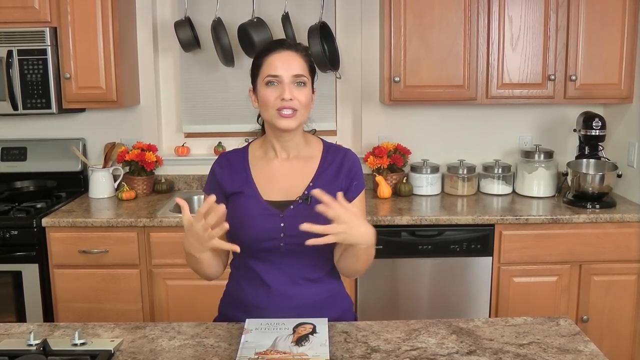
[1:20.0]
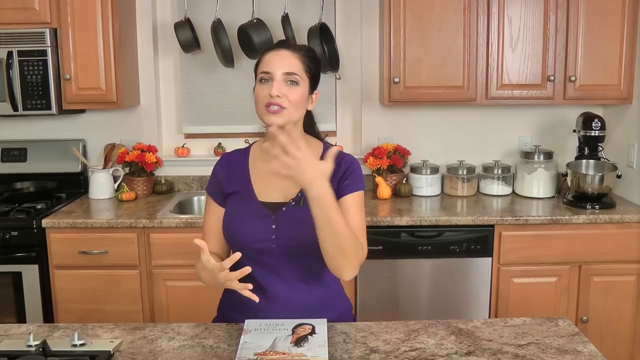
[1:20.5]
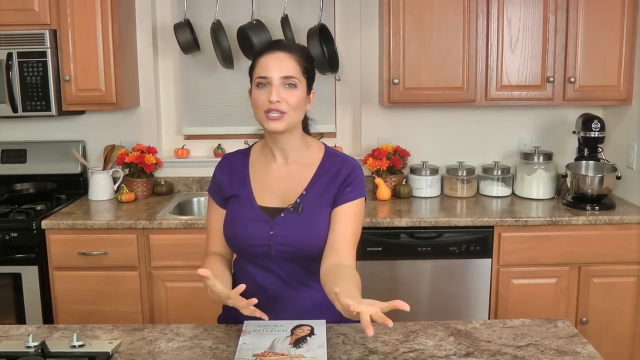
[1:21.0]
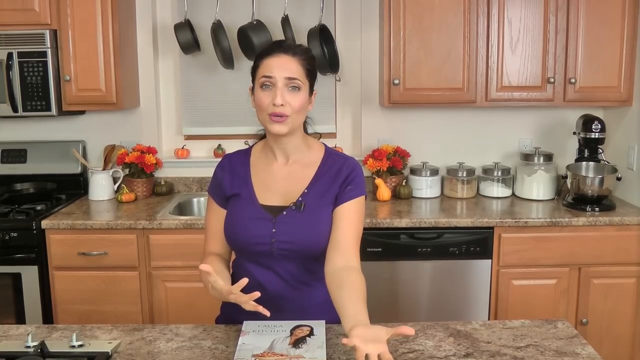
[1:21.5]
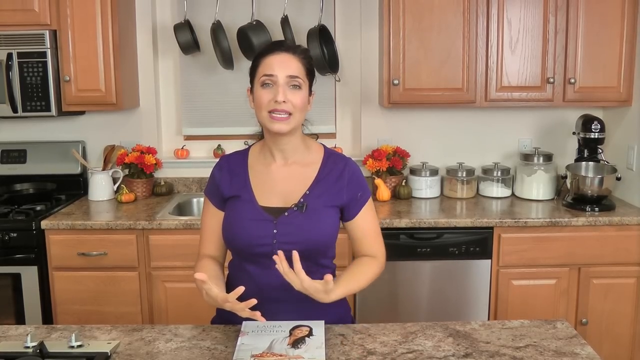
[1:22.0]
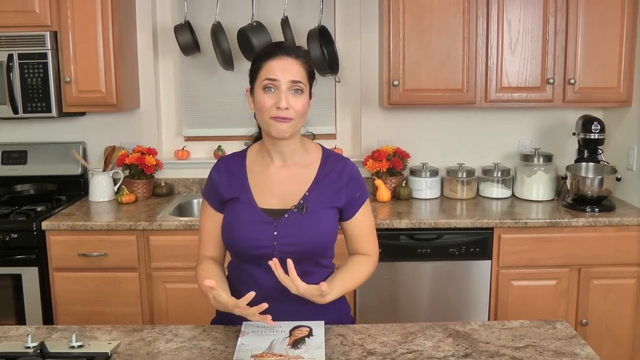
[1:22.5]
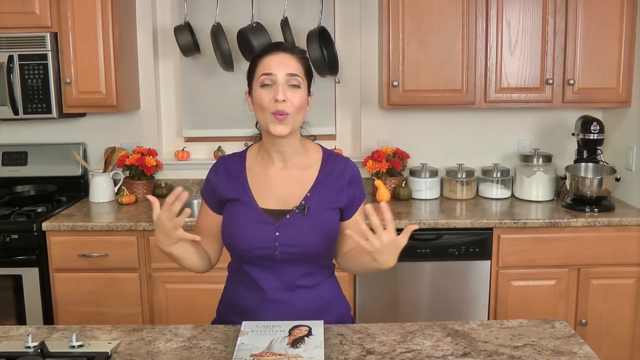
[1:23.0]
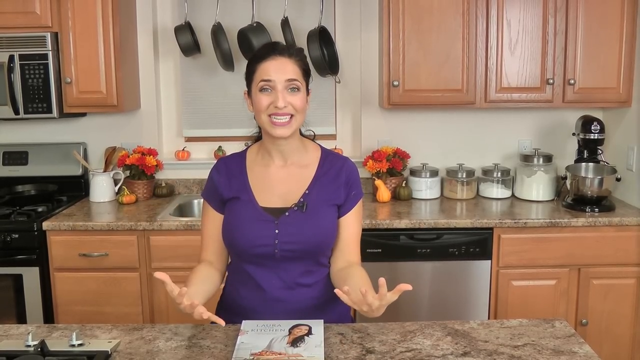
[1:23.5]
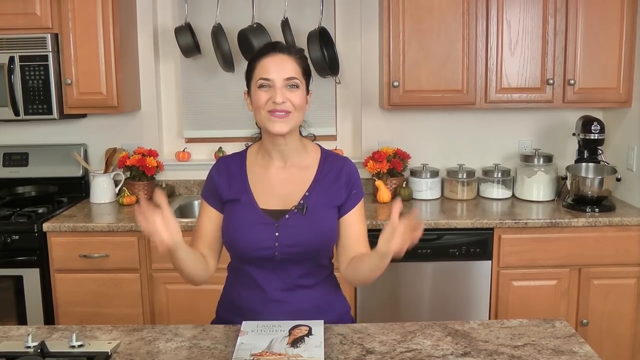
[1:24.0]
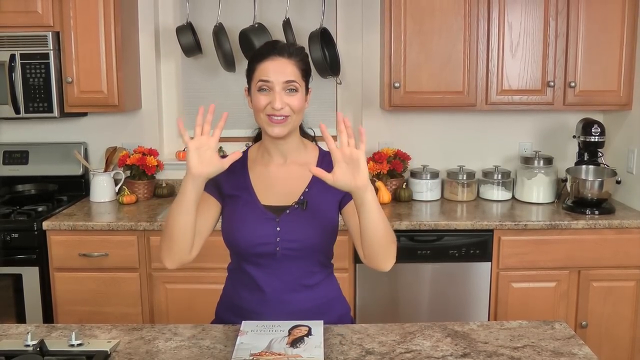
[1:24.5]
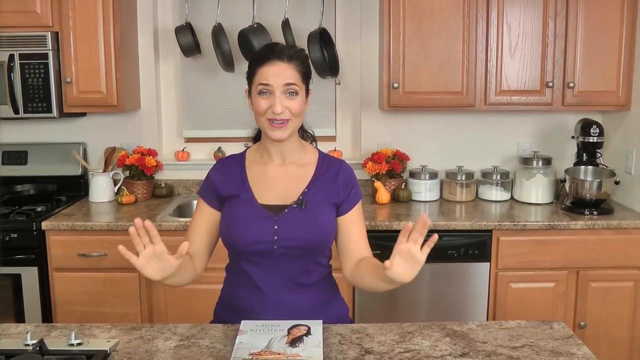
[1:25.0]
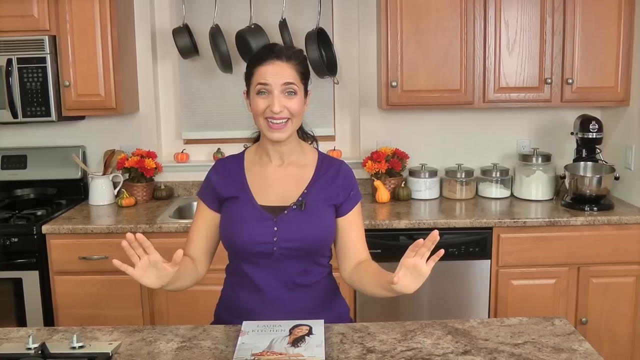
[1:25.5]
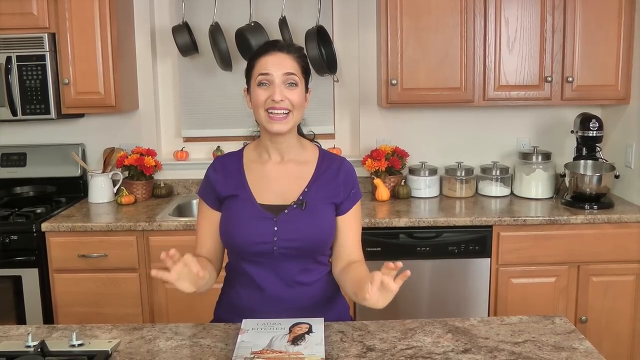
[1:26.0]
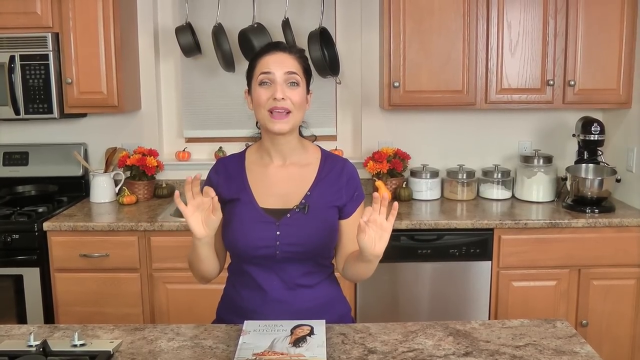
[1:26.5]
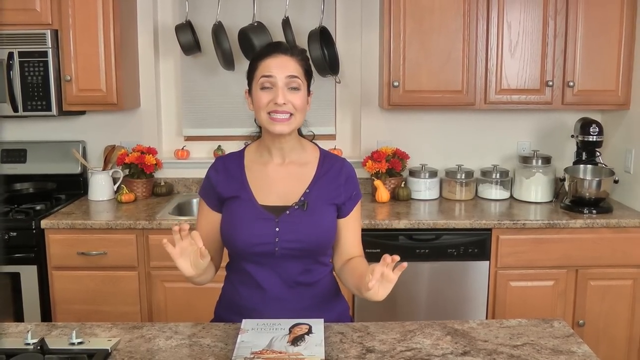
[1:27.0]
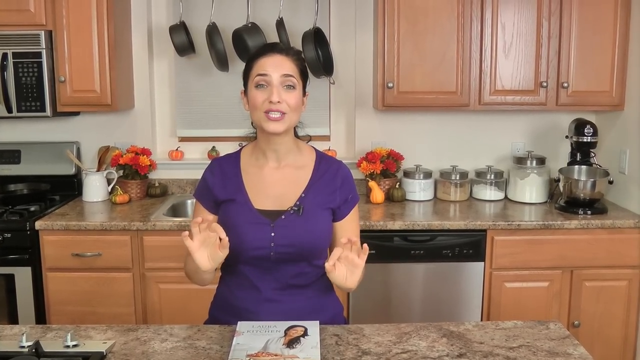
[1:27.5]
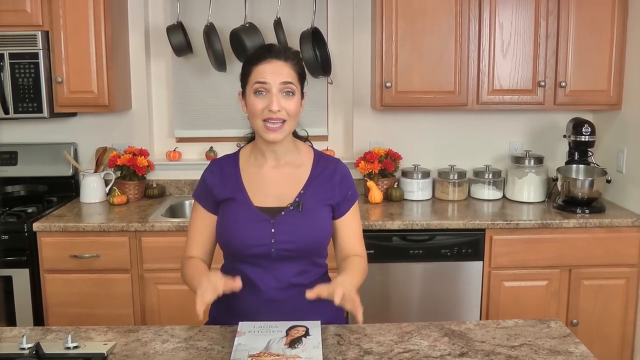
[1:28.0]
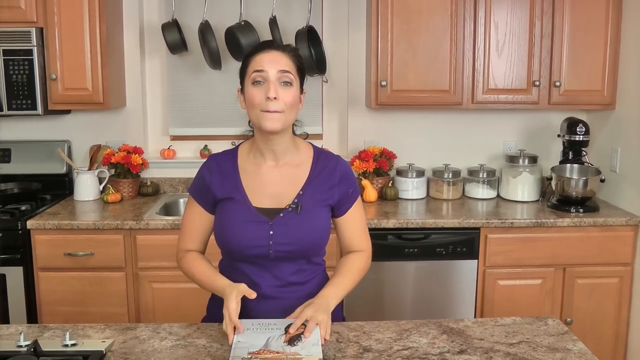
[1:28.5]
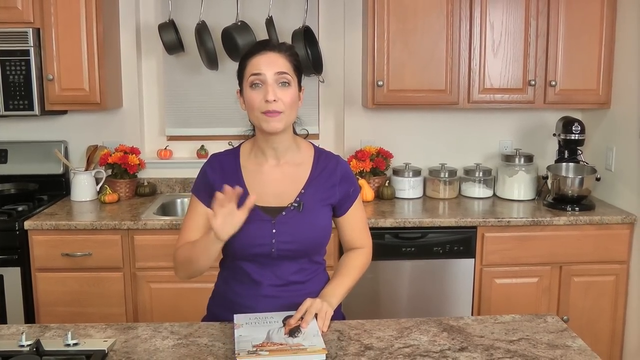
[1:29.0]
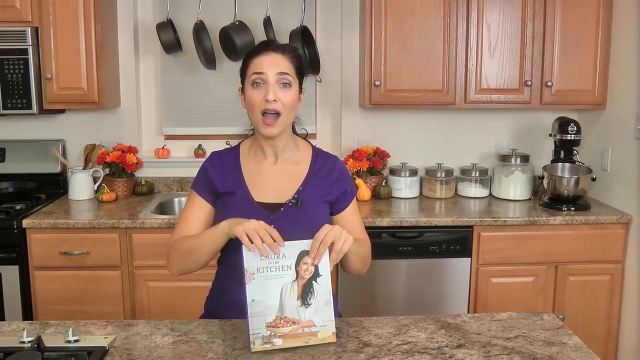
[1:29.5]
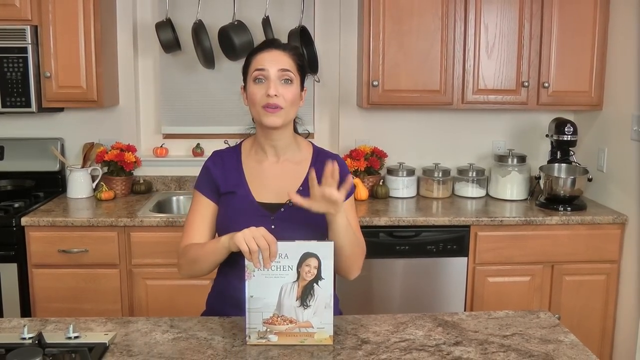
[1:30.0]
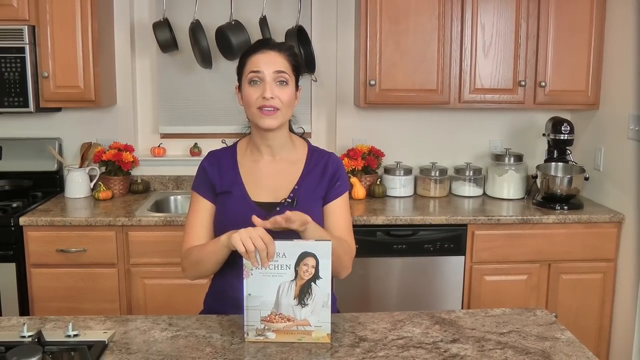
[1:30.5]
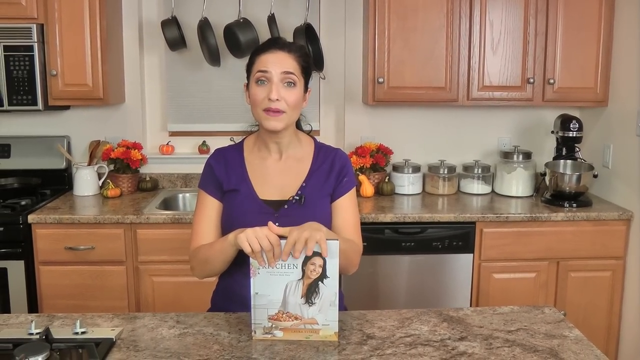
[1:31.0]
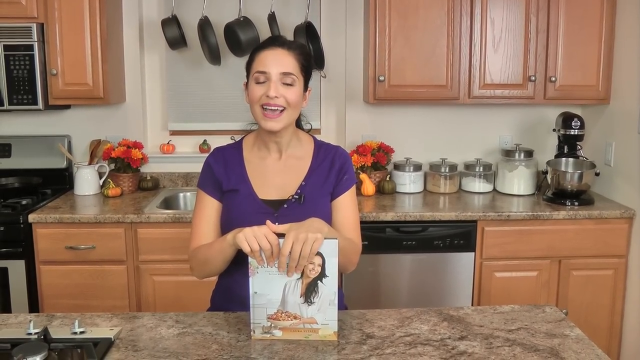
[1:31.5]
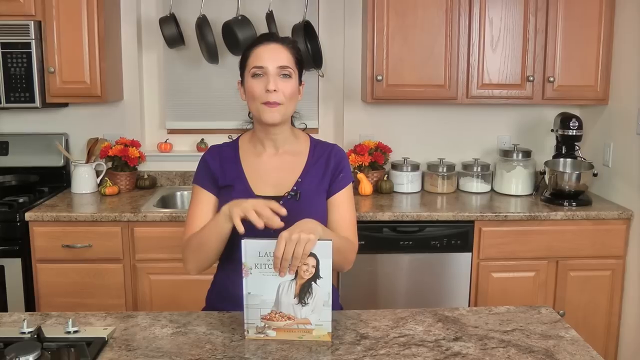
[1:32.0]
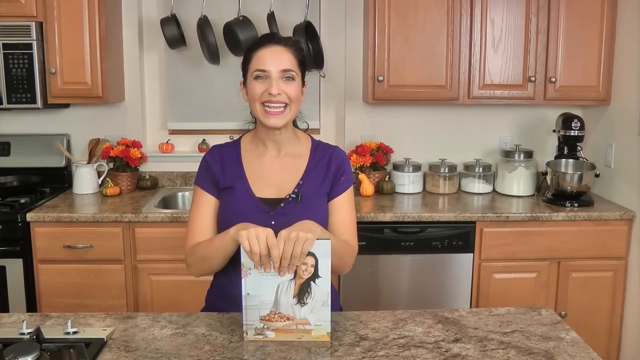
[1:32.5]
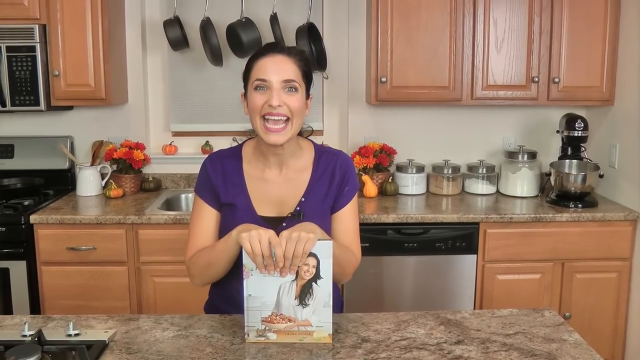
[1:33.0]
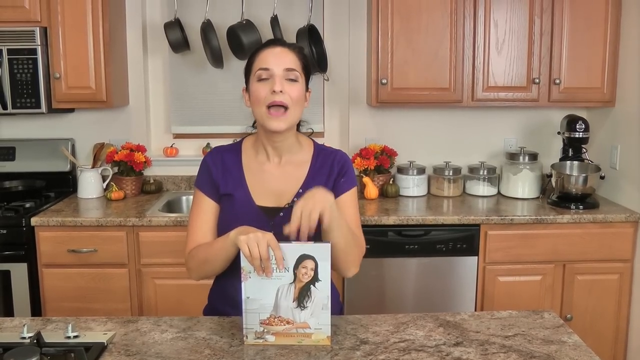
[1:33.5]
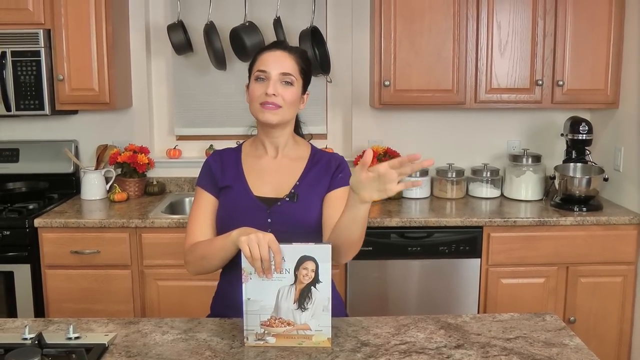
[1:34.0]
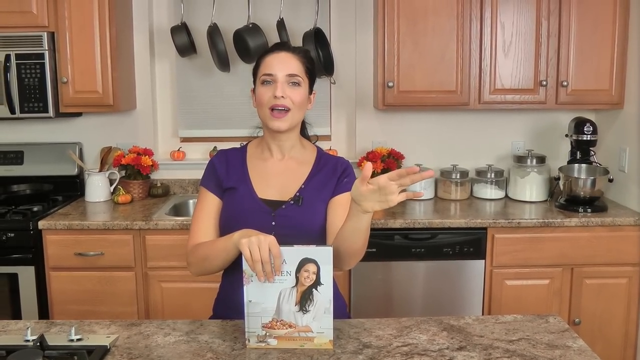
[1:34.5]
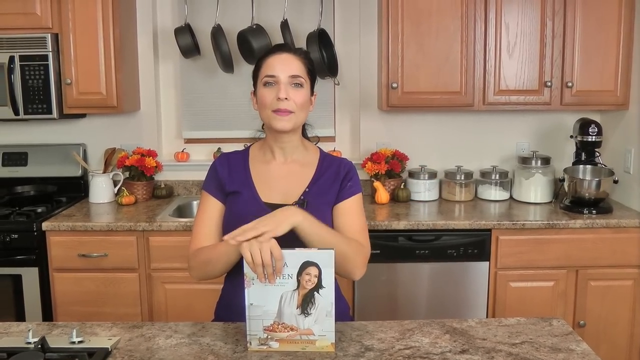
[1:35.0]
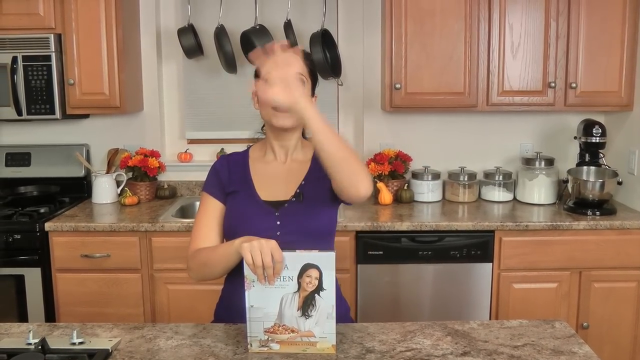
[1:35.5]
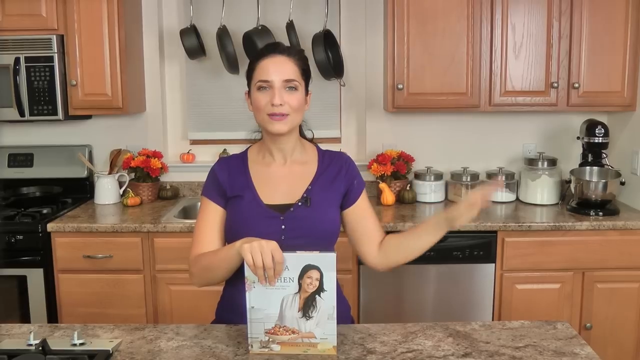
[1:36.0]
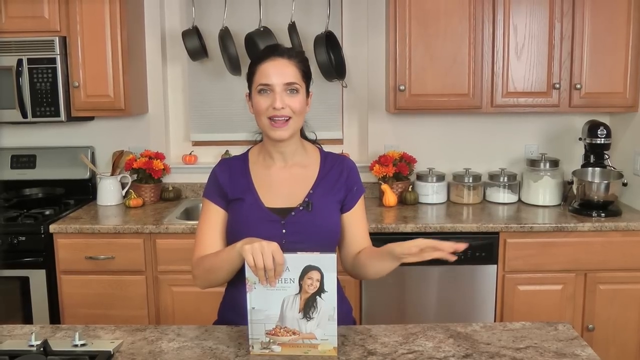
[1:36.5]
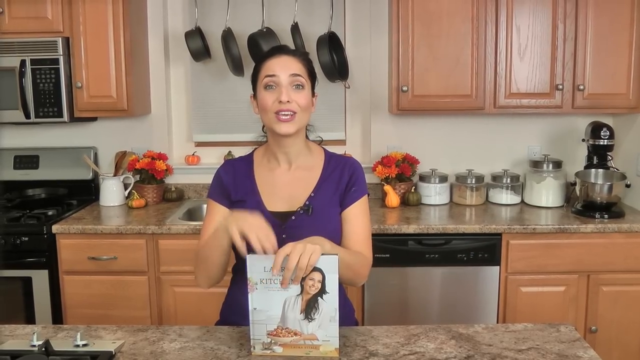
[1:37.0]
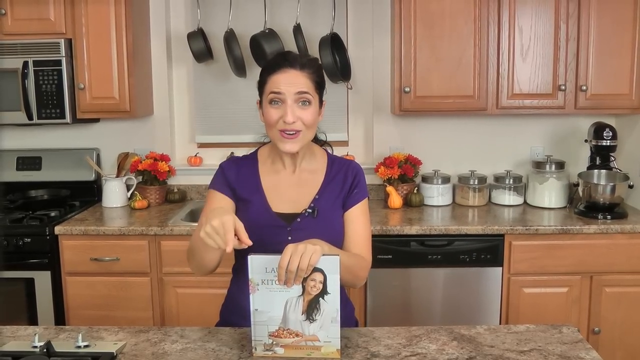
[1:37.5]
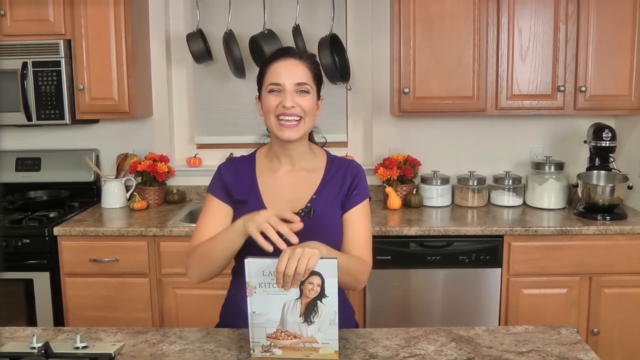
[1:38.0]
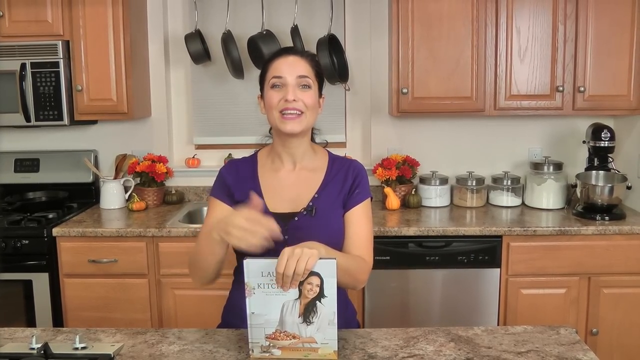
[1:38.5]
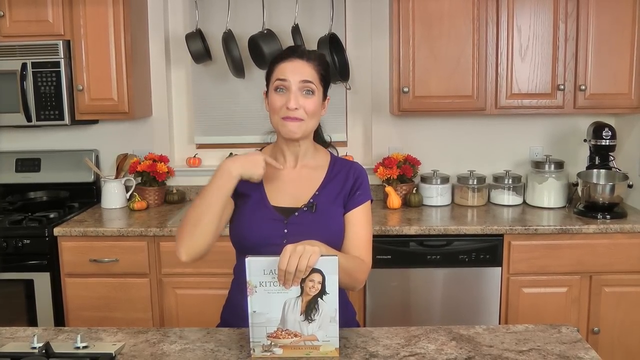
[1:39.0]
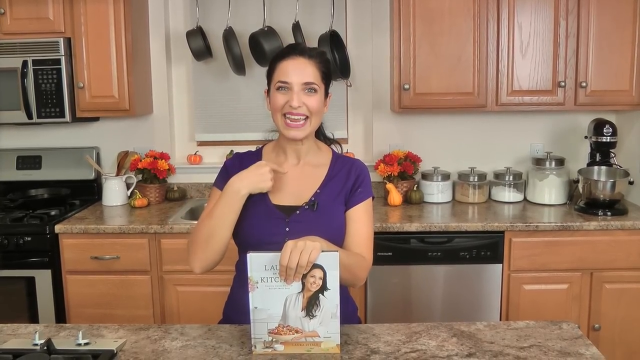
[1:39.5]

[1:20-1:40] The camera shakes slightly. A woman holds a white book whose front cover shows food and a woman in a white top with long black hair, along with written words. The book is then placed on the table in front of her, which has something like a stove on it. At the back are a table, a washing machine, another stove, a microwave, pans hanging on the wall, decorative flowers and pumpkins, and spices in different containers. The spices include white and brown ones, and the containers have silver tops. A silver and black mixing machine is there, and wooden cupboards are on the wall.